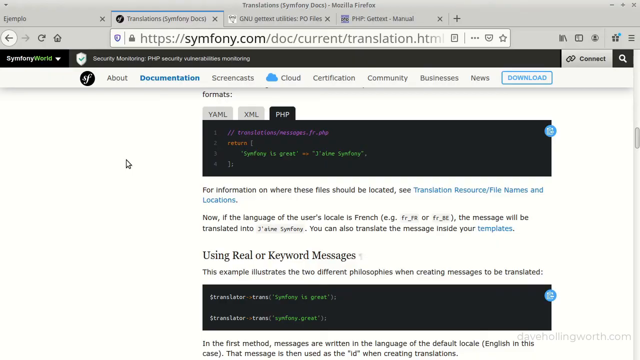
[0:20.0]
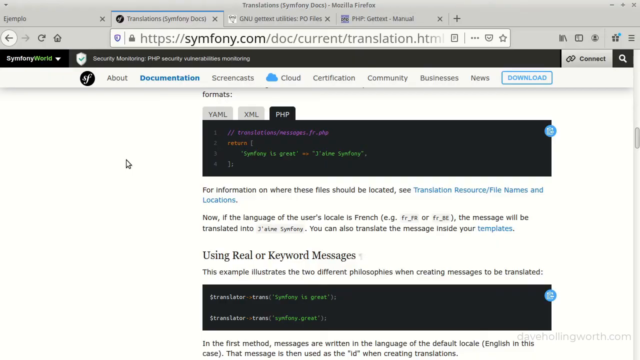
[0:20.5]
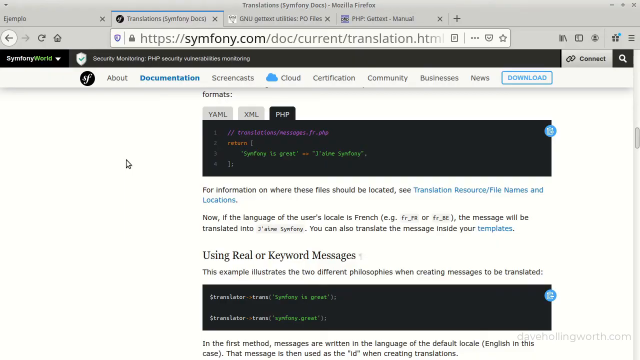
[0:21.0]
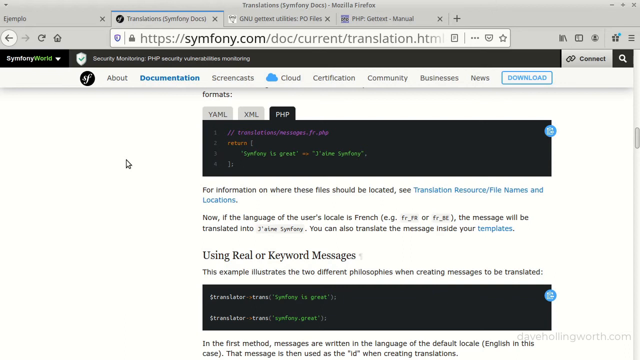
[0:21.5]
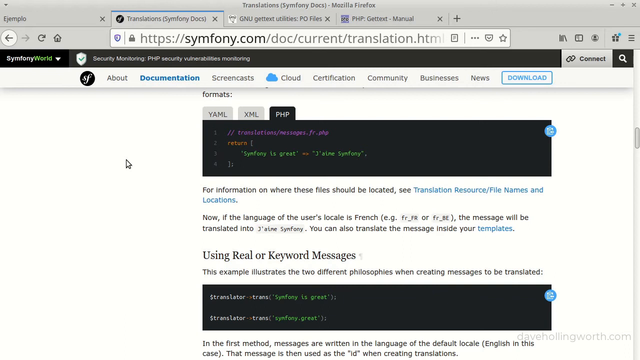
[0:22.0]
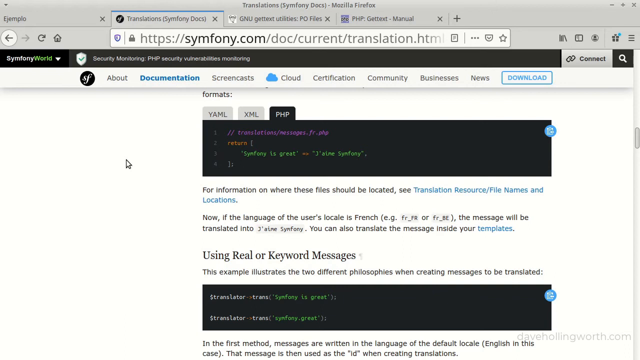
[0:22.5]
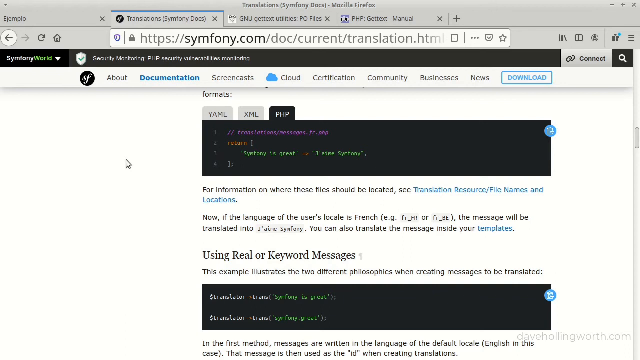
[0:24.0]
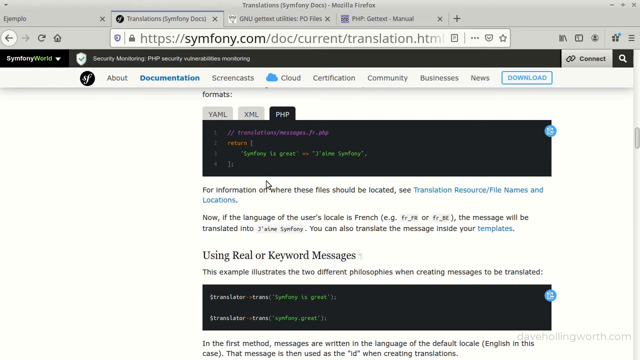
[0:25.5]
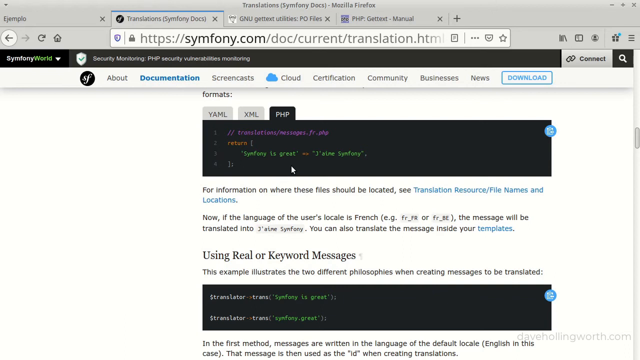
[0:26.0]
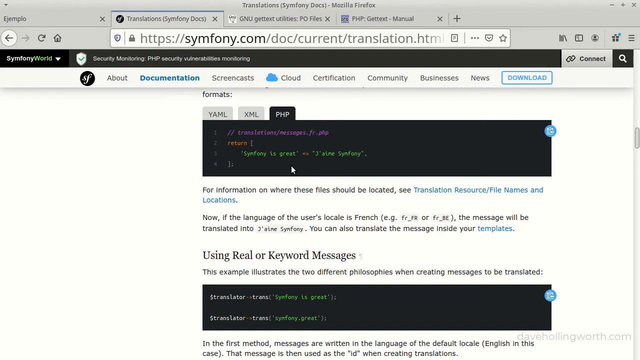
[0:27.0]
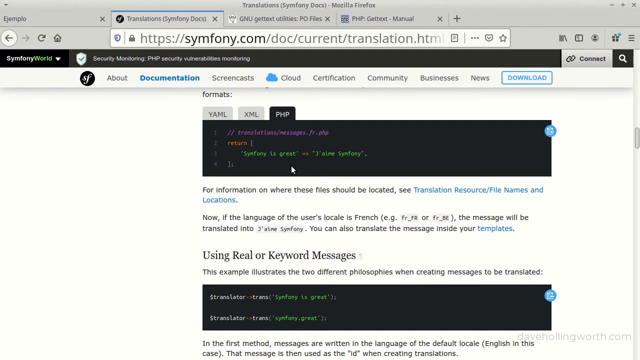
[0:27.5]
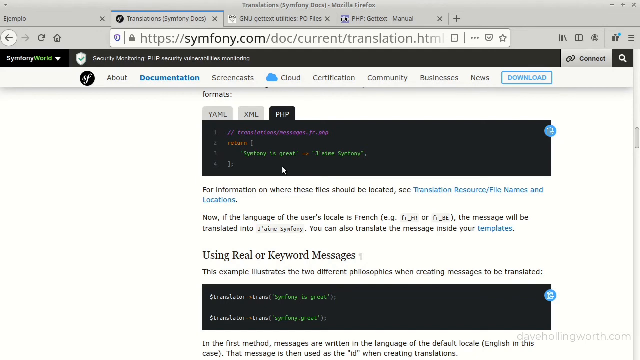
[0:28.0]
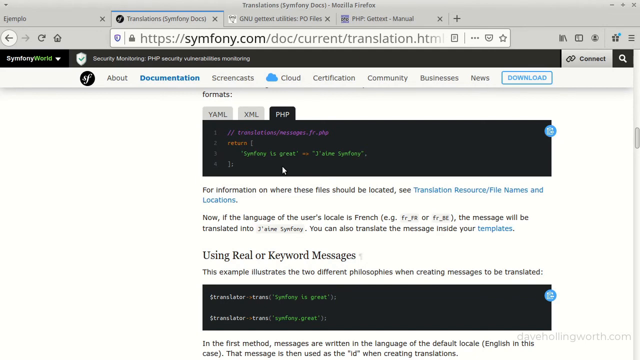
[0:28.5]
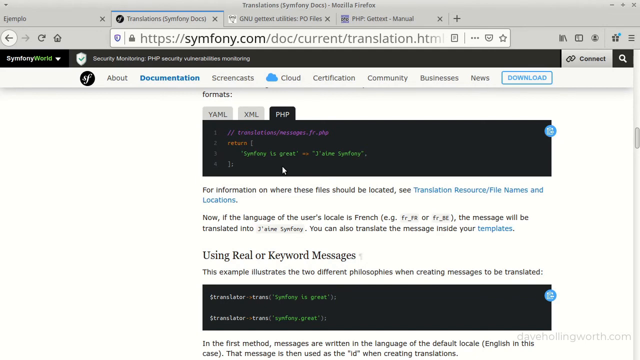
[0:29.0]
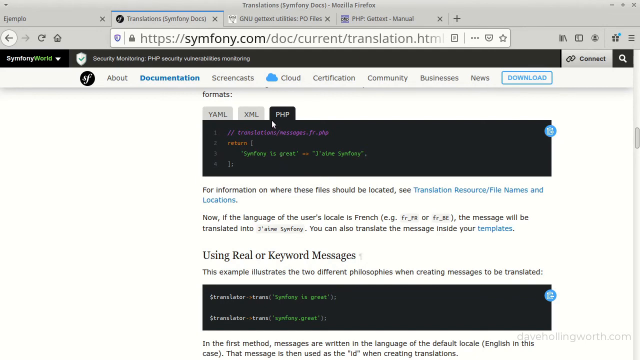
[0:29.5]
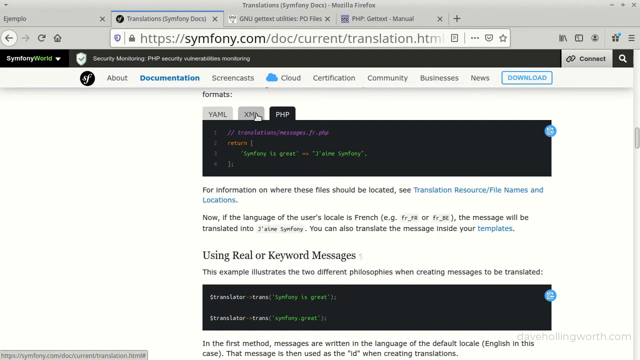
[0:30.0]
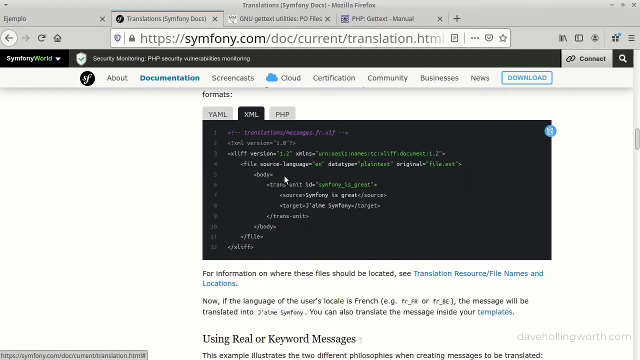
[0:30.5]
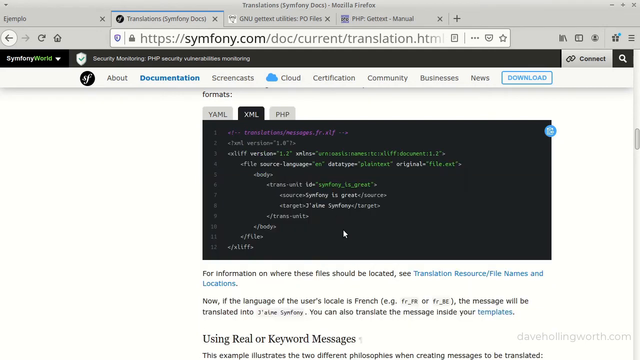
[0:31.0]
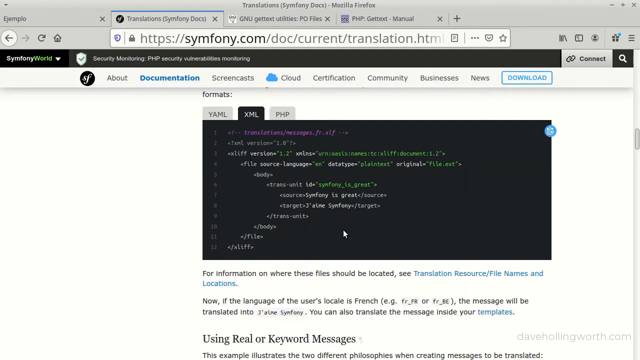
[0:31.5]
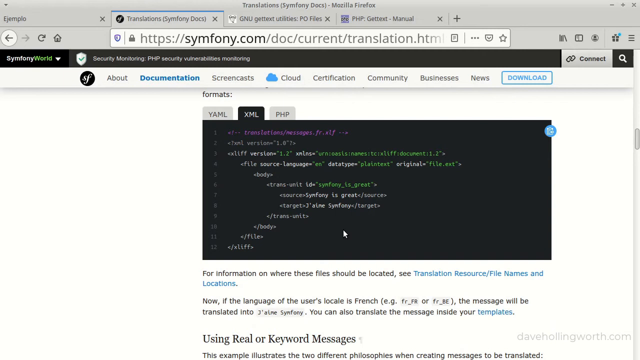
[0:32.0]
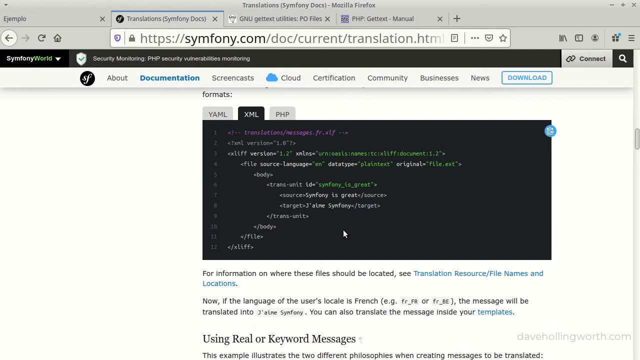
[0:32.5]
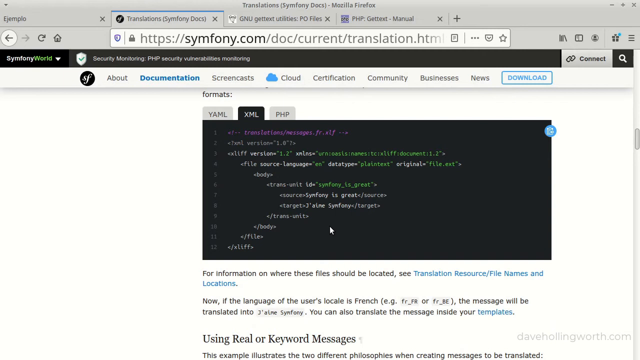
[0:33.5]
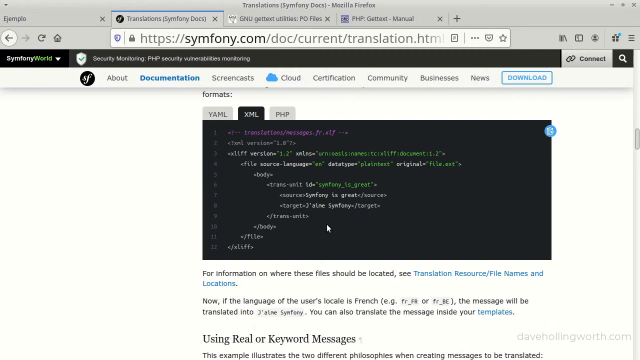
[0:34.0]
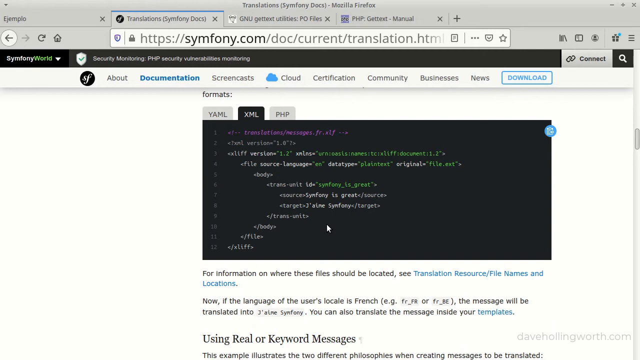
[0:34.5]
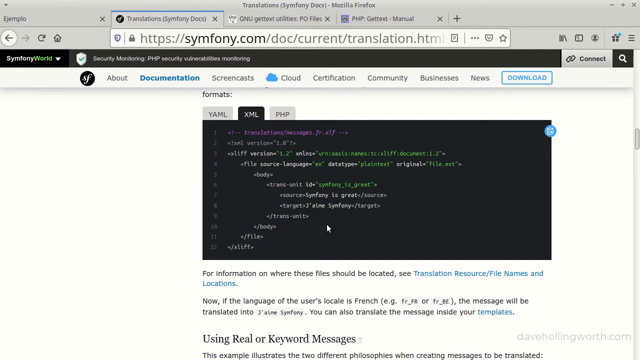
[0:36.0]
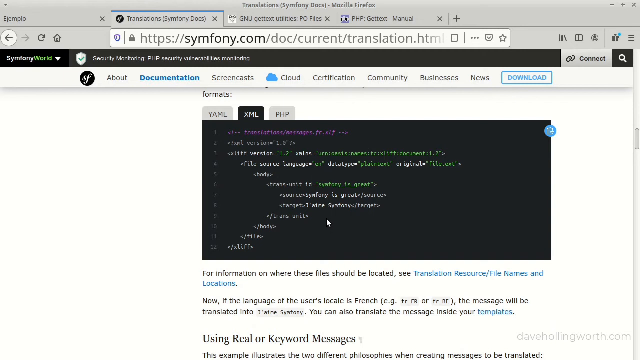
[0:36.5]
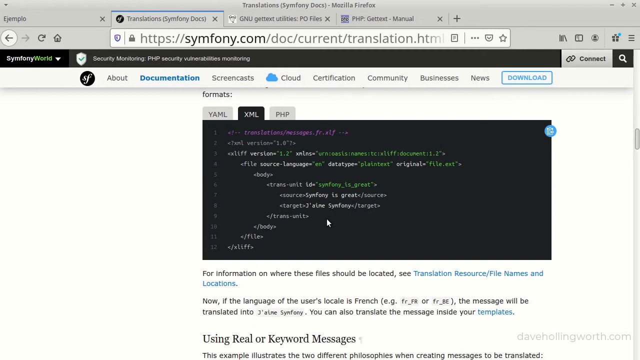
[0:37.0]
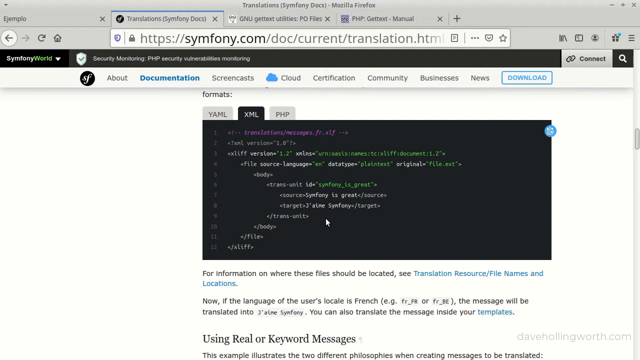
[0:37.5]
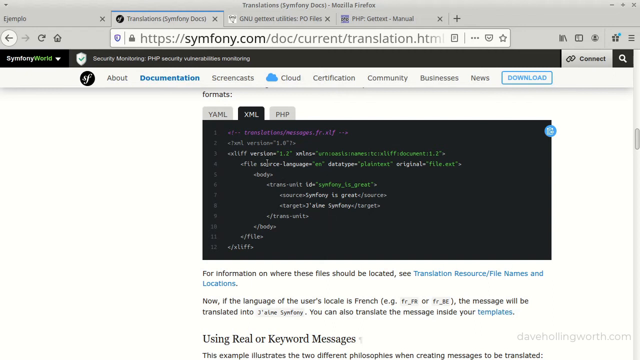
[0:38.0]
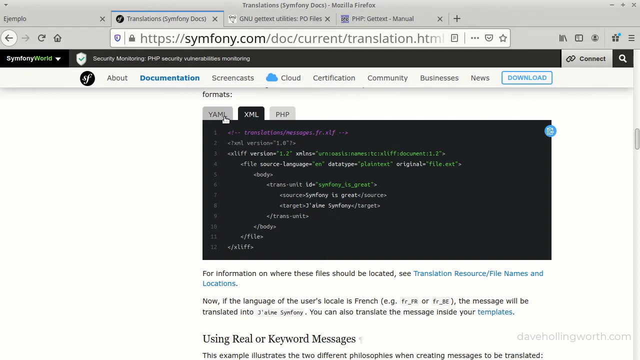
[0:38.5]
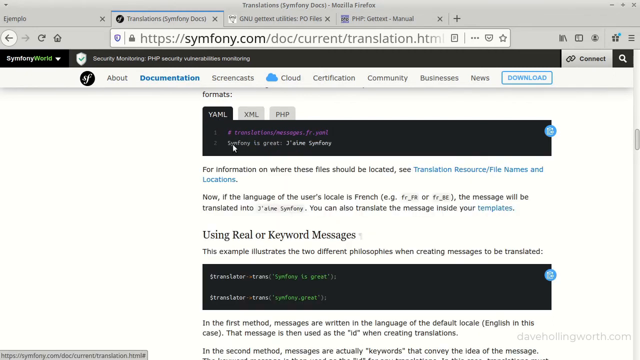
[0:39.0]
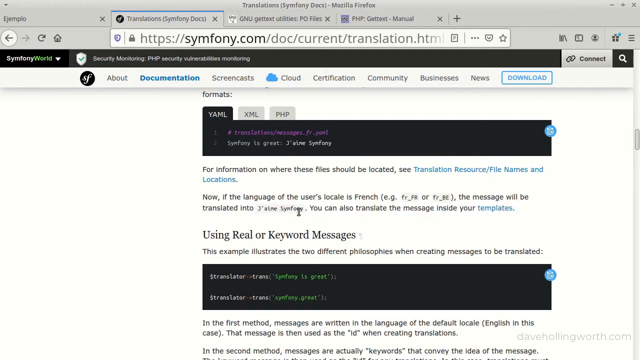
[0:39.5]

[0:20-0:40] The symfony.com website is still open, showing the PHP example: a few lines of color-coded code with an explanation below. The view switches to the XML format, where the color-coded code is much lengthier, with many more lines and other text. It then switches to the YAML format example, which has a few lines of code. The view returns to the PHP example and briefly scrolls through the different code examples, quickly reviewing the lines and content. Further below is more information with additional translation resources and files; the language in the example is French, with information on how to obtain the French version of the examples.